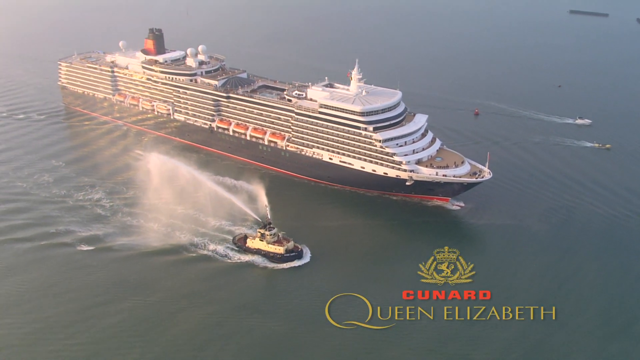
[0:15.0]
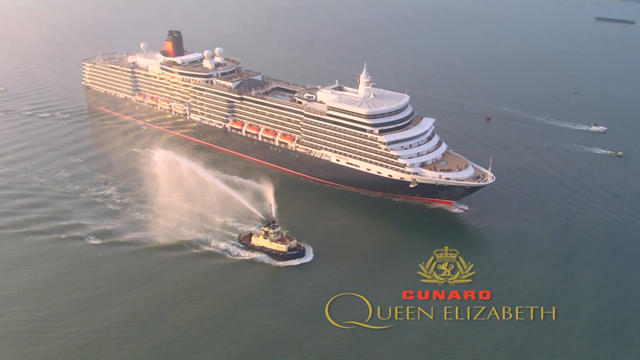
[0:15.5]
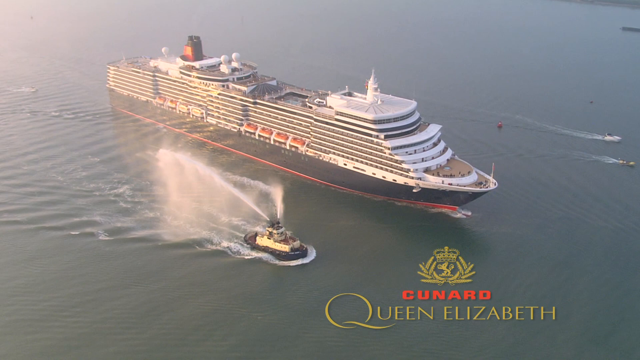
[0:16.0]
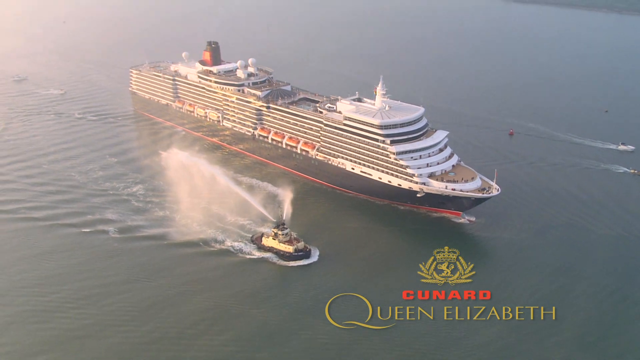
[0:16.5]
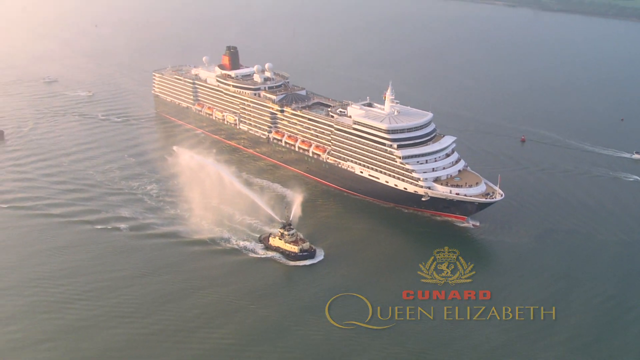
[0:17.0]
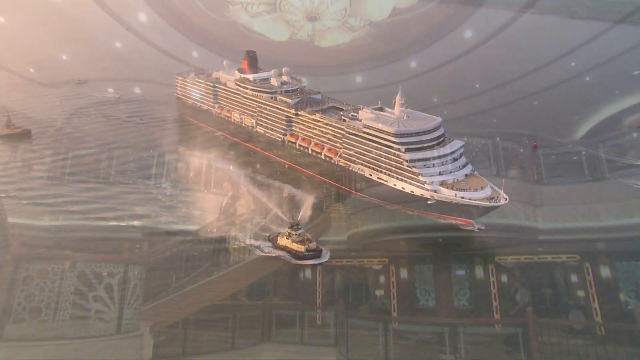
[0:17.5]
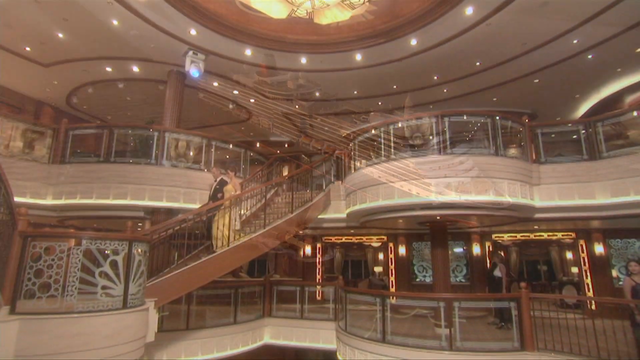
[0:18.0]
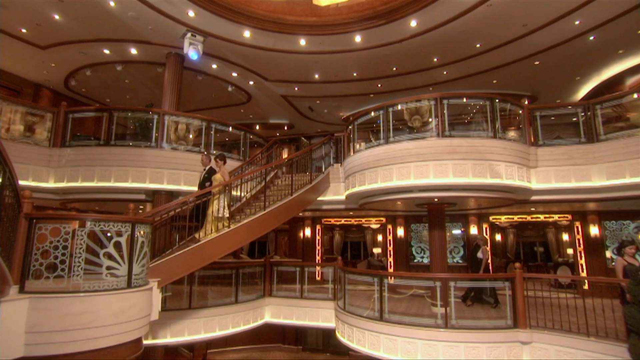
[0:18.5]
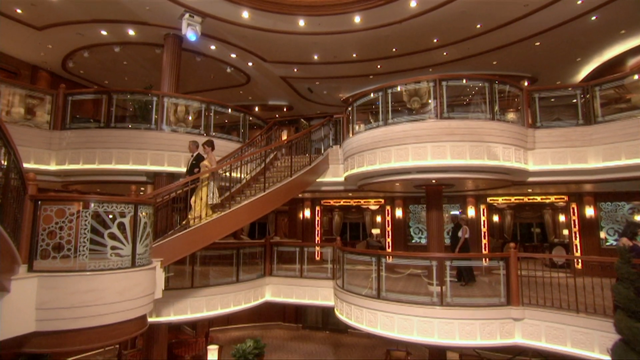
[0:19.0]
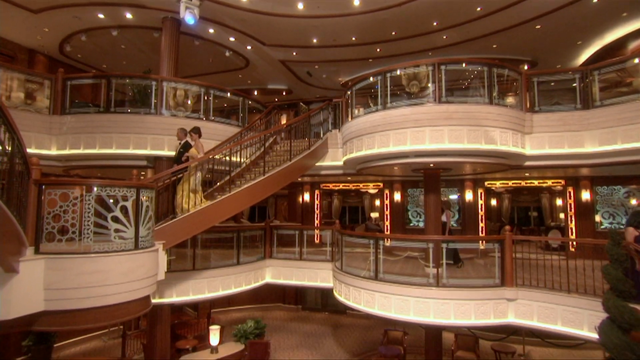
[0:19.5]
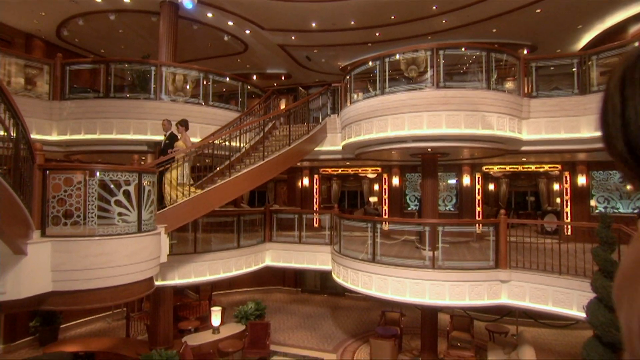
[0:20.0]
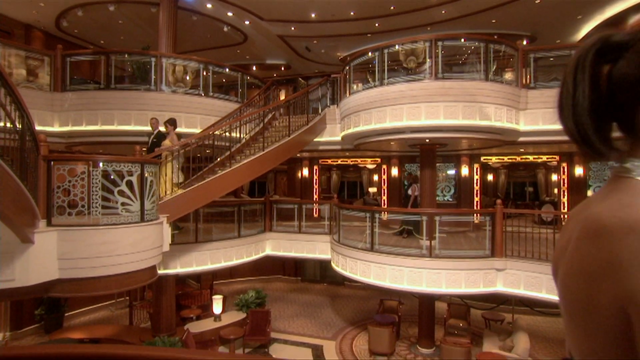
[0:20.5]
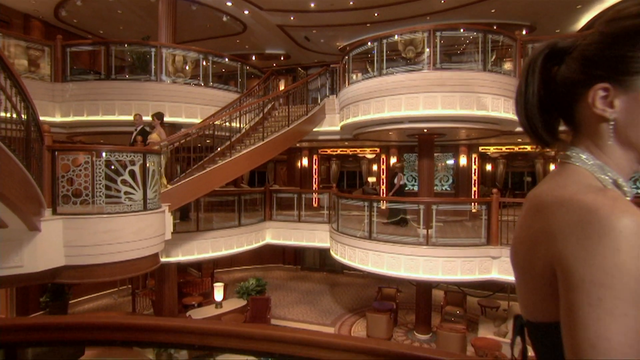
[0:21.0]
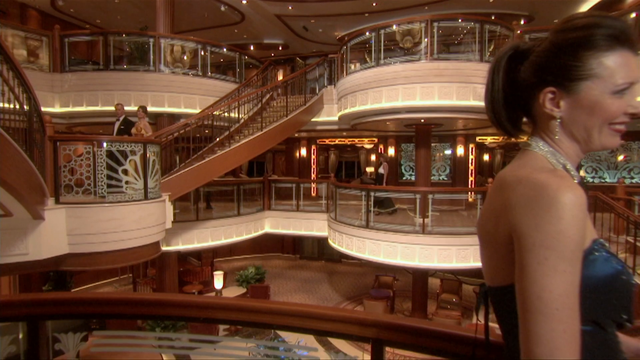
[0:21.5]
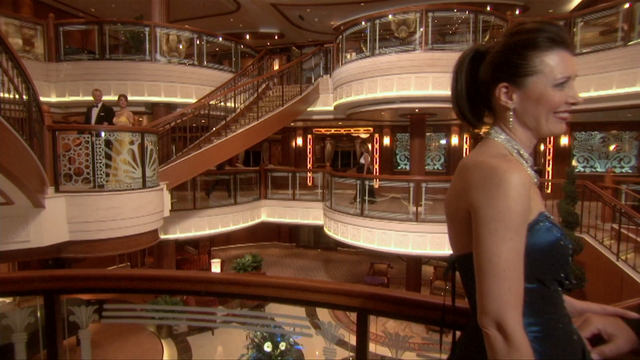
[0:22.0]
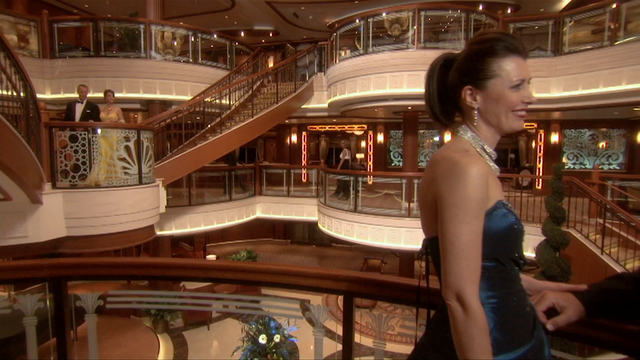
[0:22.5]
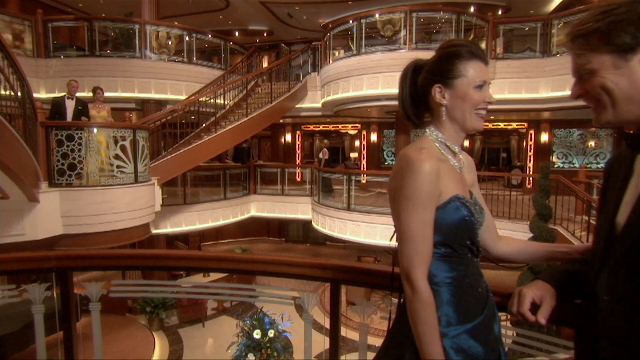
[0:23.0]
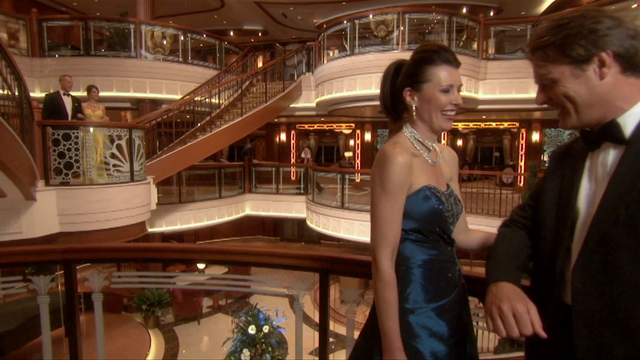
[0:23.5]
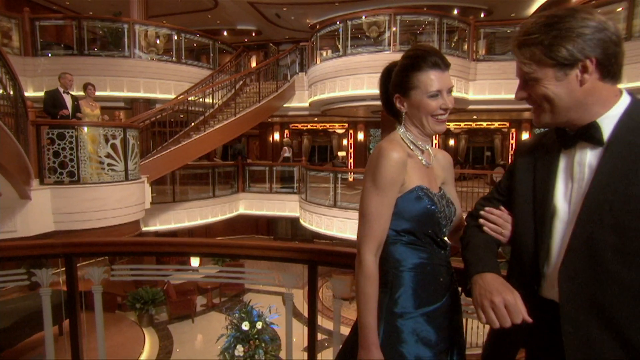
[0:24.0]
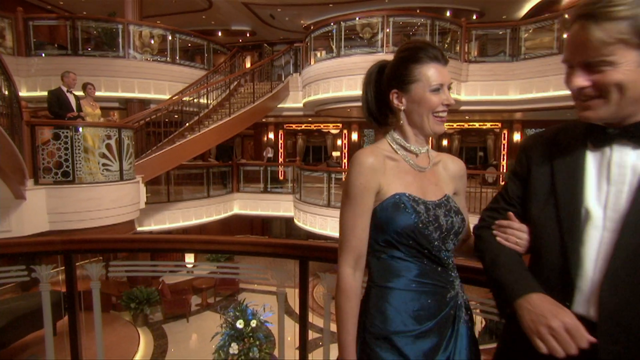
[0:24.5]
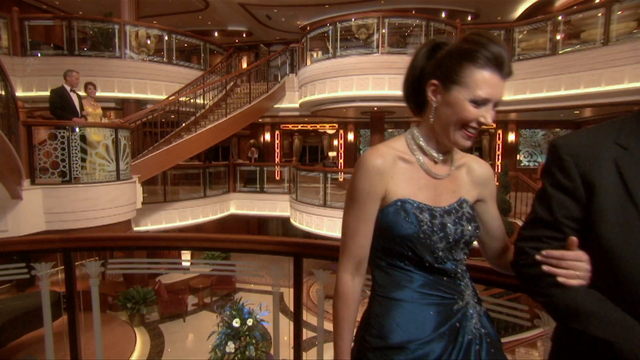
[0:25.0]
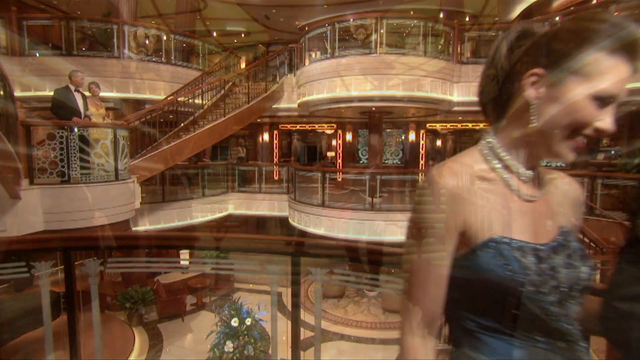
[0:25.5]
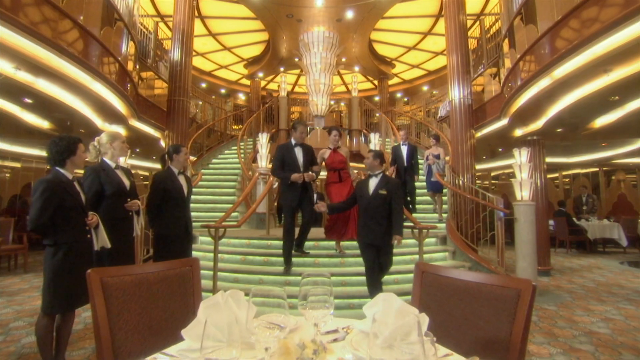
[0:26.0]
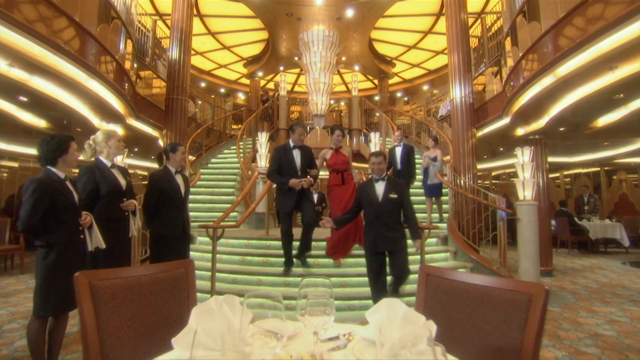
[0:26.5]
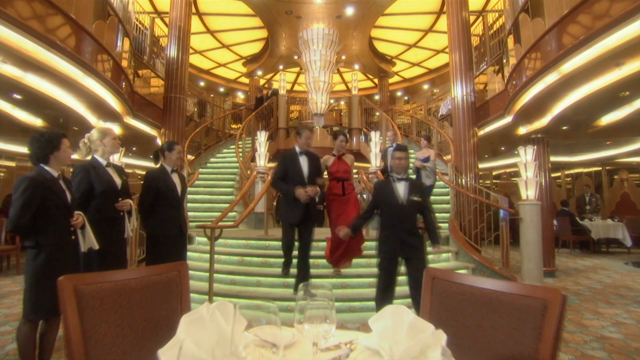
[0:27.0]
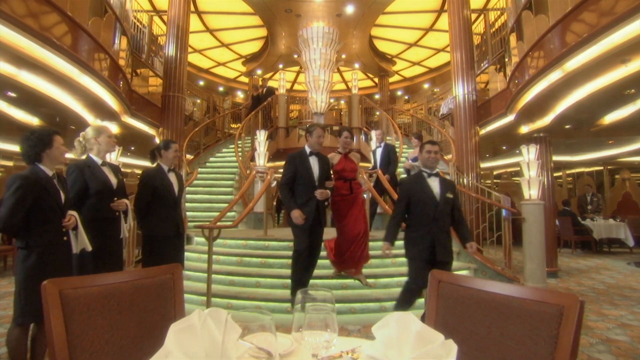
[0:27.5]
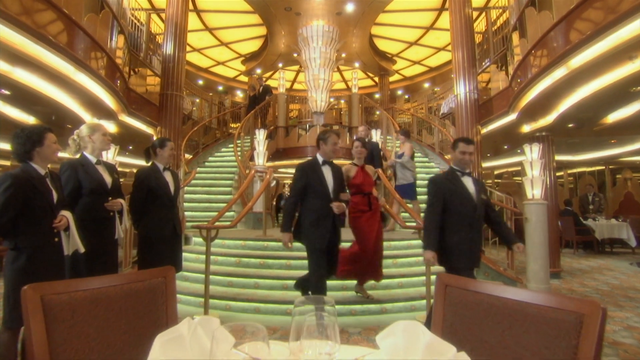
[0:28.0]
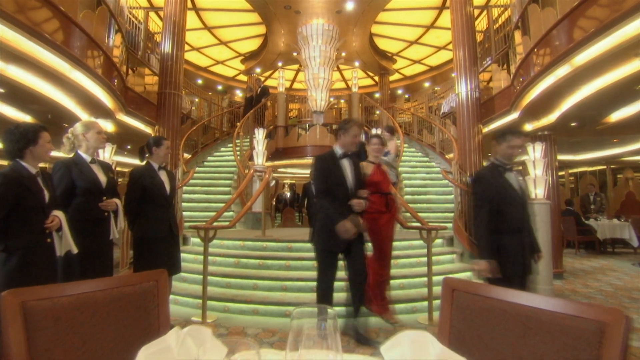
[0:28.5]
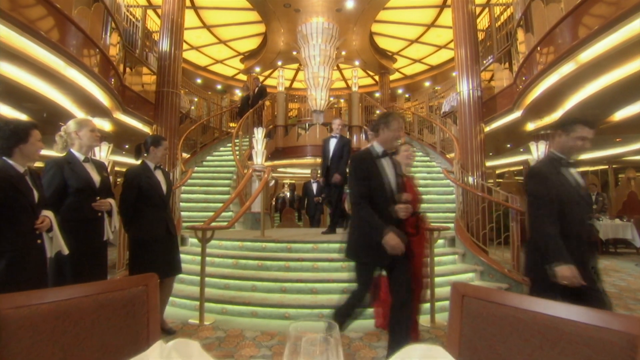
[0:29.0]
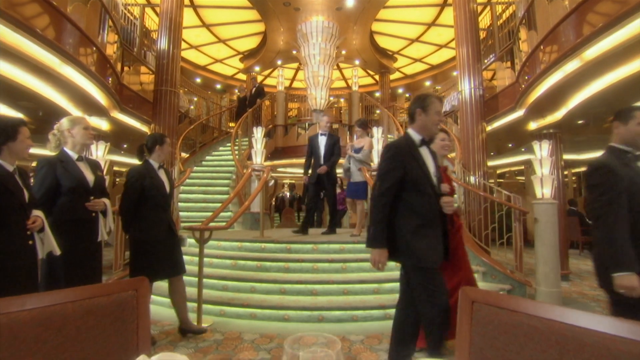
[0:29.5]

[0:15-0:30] A large cruise ship travels through the water. It is red on the very bottom, followed by navy blue, and mostly white on the upper decks, with a red and navy blue smokestack on top and lifeboats on its side. A yellow tugboat moves along beside it, spraying water. In the bottom right of the screen, text reads "Cunard, Queen Elizabeth." The scene changes to the interior of the ship: a large, ornate lobby with a central staircase going down, mostly brown, gold and white, with formally dressed people smiling. It quickly shifts to another view of a staircase coming down; the staircase looks green, and there is a yellow, ornate ceiling. Multiple formally dressed people go down the stairs and move into the lower level of the room. There appear to be about ten people in this shot, about seven of whom look to be guests and three of whom look to be employees of the ocean liner.